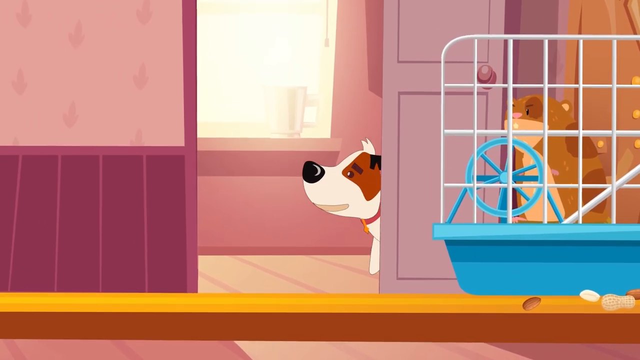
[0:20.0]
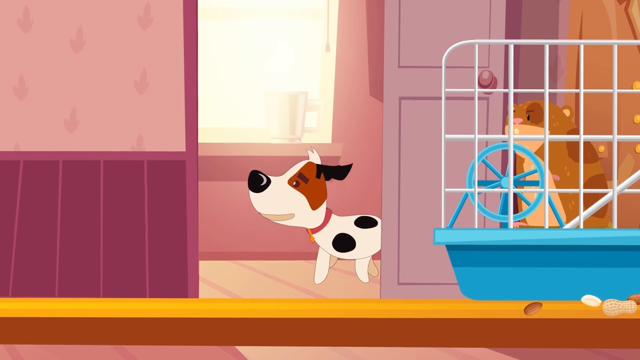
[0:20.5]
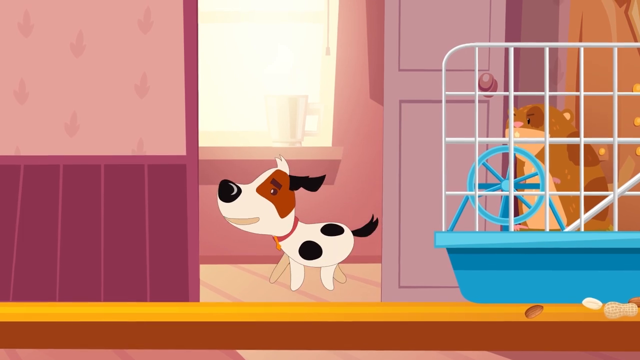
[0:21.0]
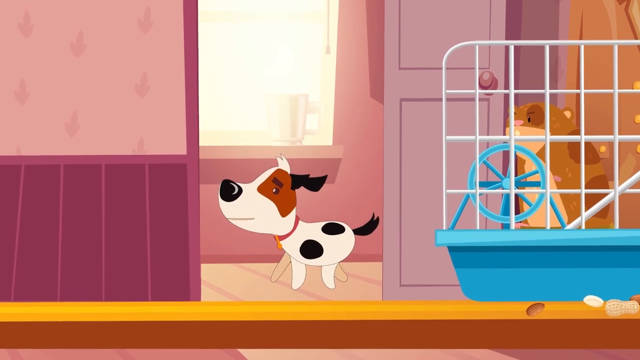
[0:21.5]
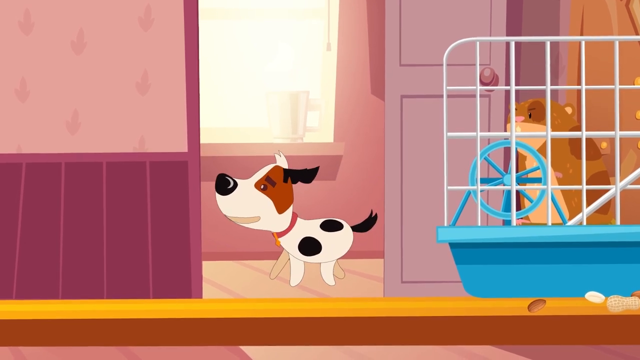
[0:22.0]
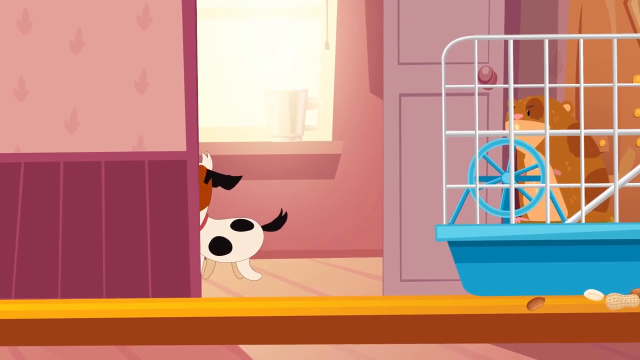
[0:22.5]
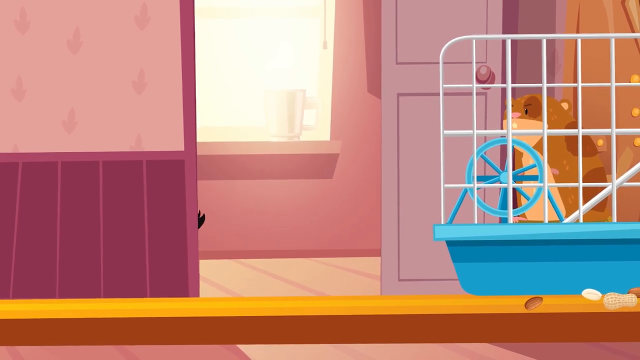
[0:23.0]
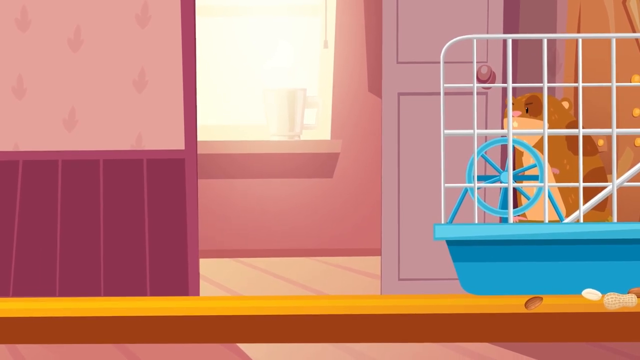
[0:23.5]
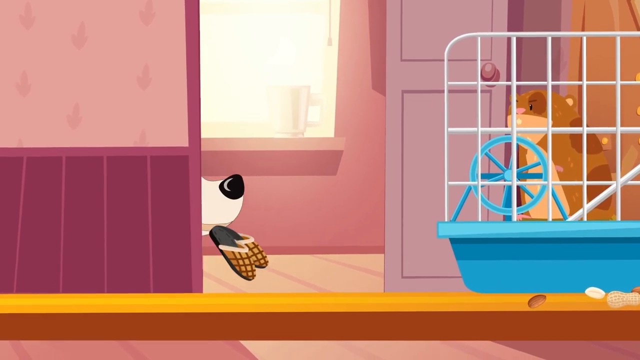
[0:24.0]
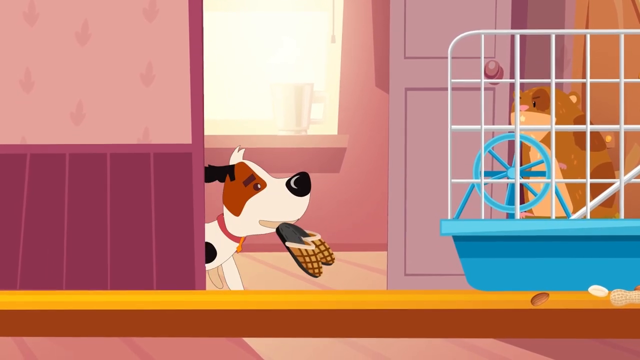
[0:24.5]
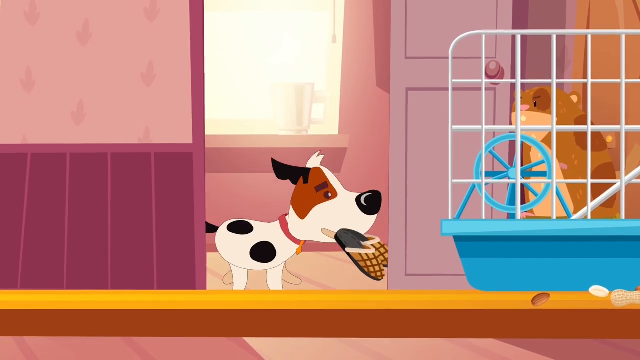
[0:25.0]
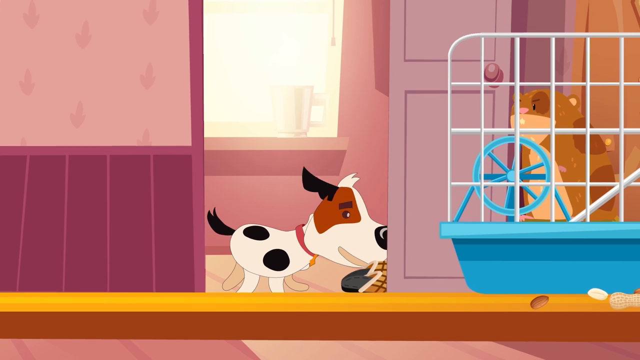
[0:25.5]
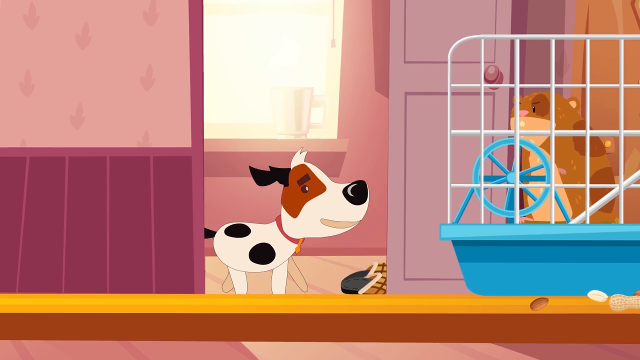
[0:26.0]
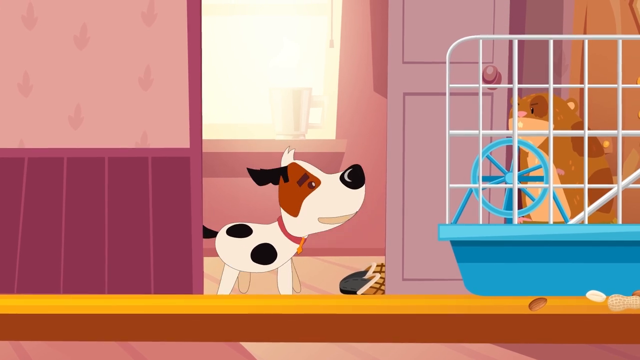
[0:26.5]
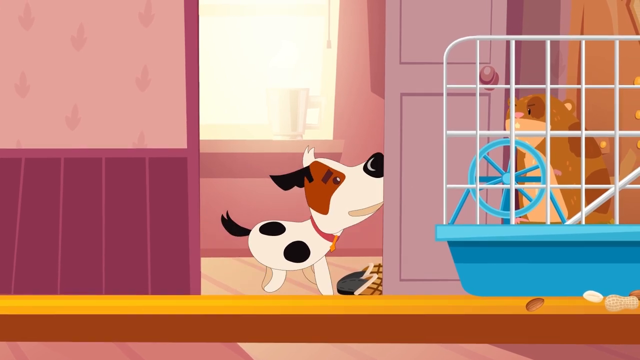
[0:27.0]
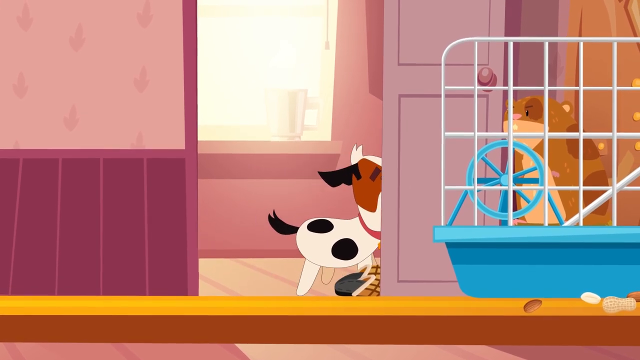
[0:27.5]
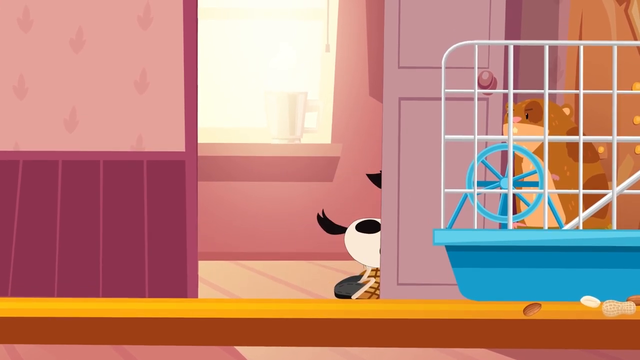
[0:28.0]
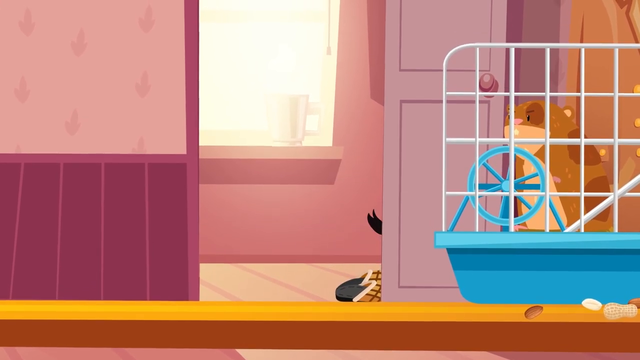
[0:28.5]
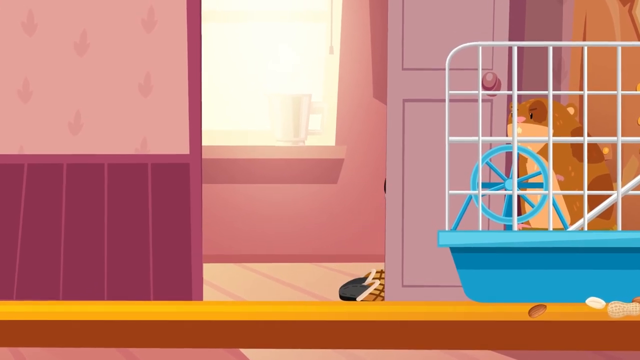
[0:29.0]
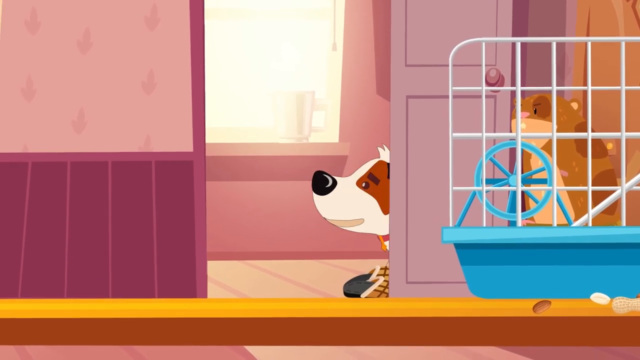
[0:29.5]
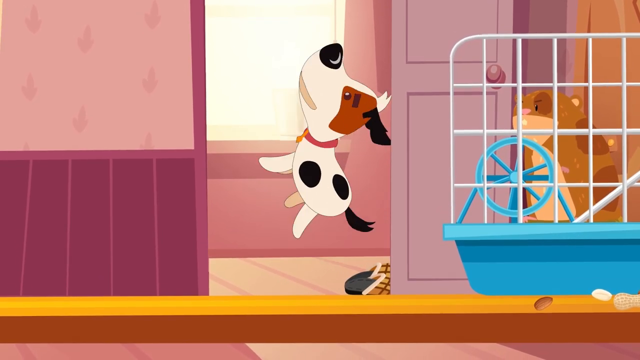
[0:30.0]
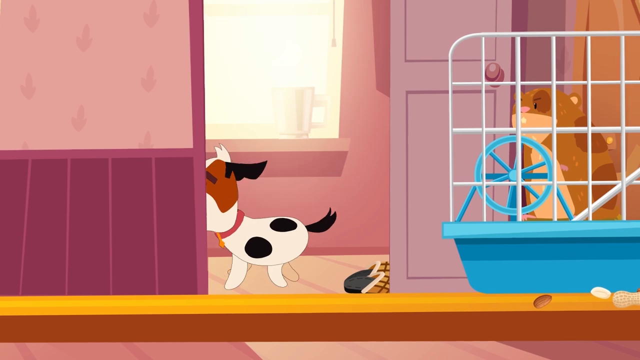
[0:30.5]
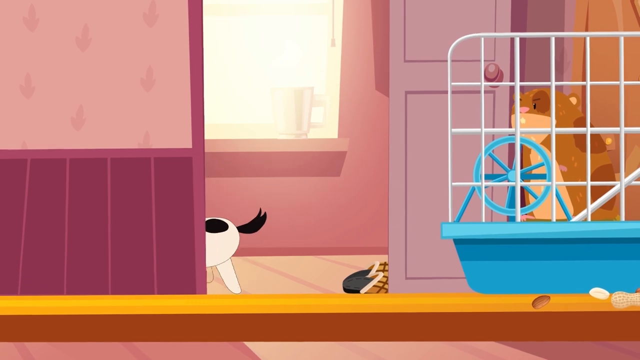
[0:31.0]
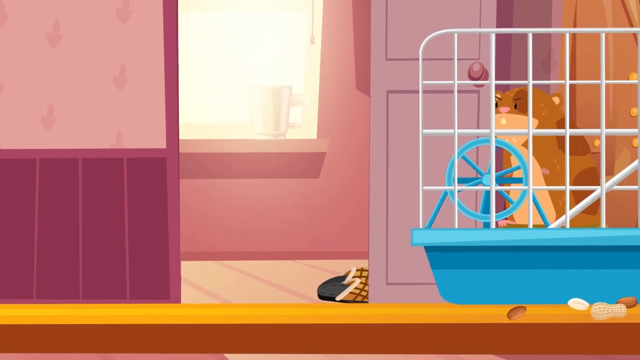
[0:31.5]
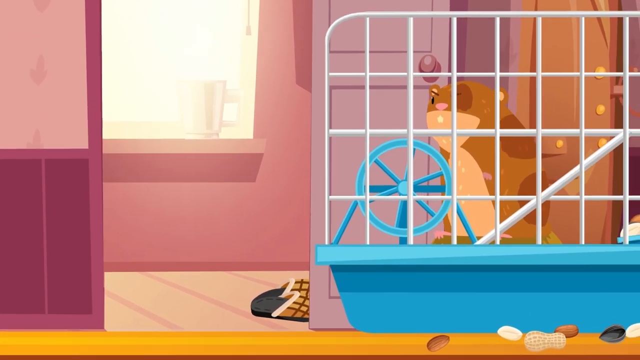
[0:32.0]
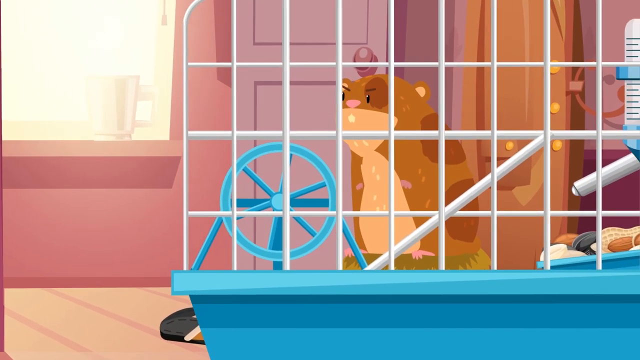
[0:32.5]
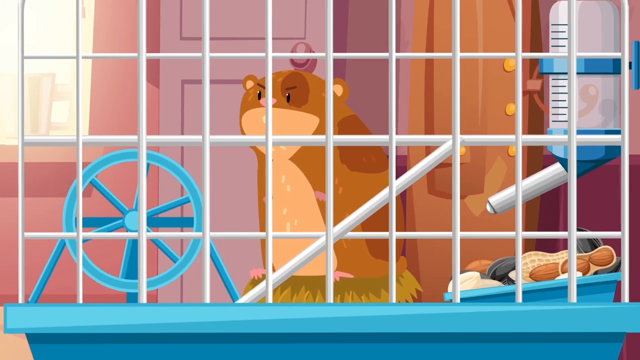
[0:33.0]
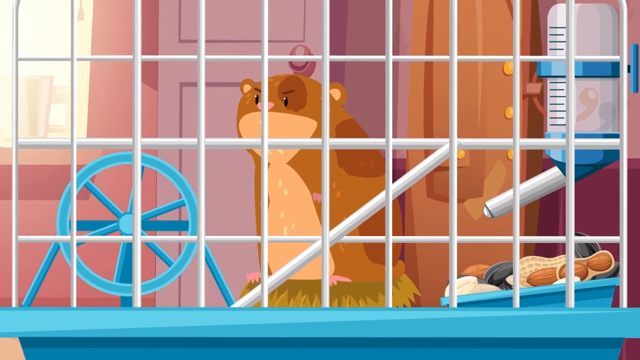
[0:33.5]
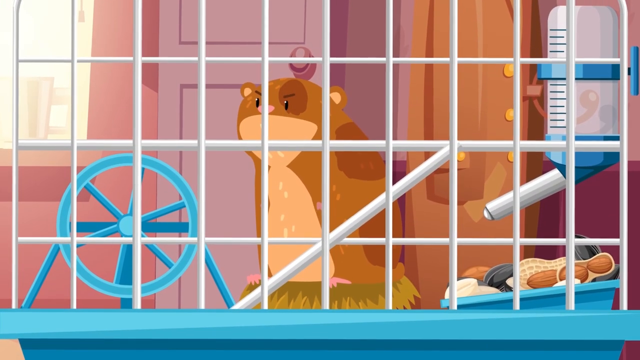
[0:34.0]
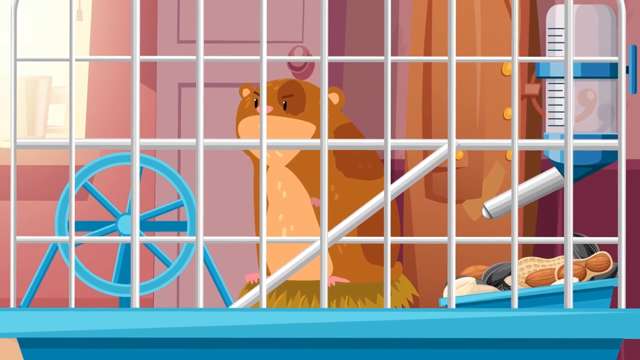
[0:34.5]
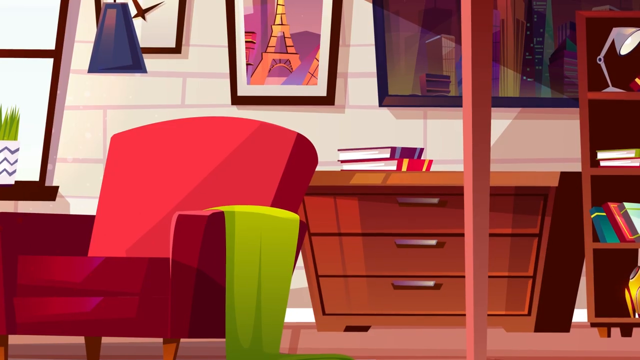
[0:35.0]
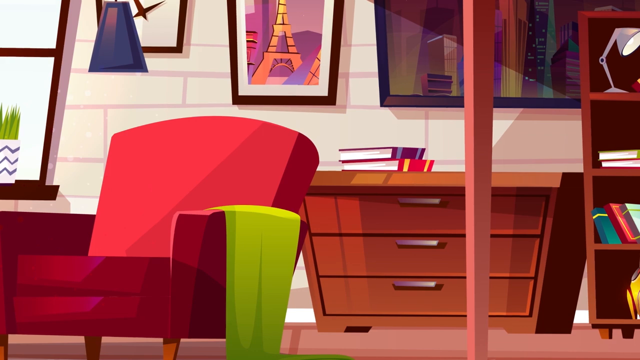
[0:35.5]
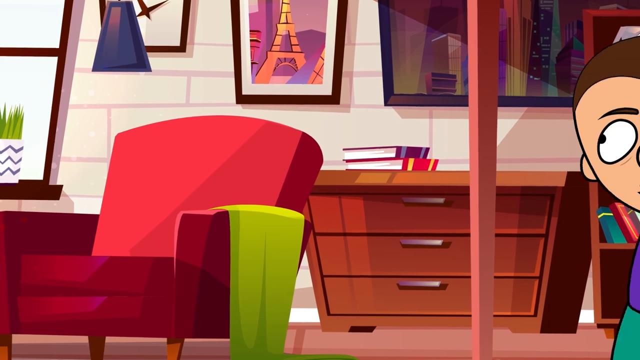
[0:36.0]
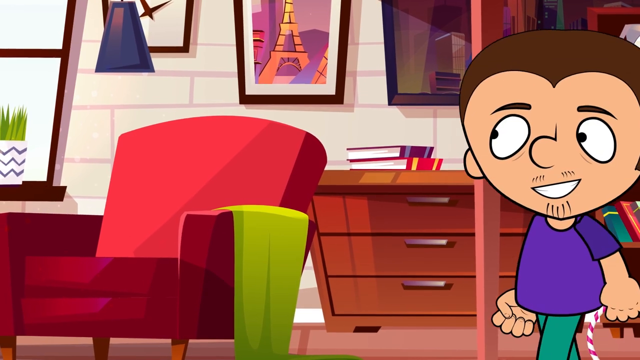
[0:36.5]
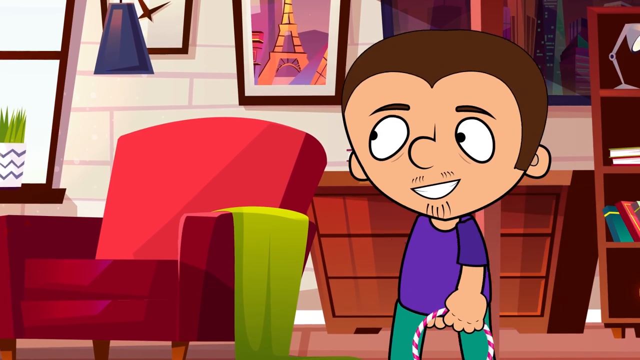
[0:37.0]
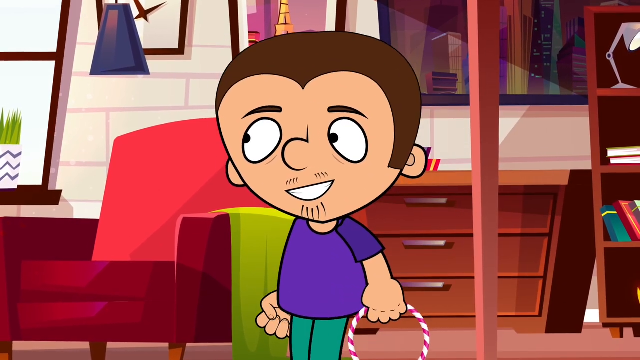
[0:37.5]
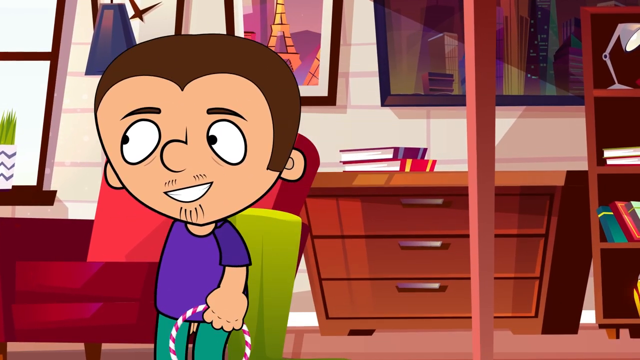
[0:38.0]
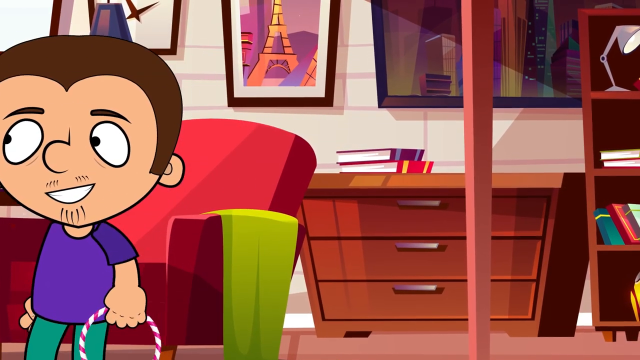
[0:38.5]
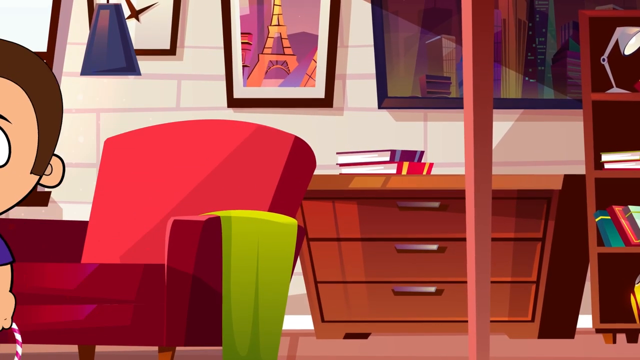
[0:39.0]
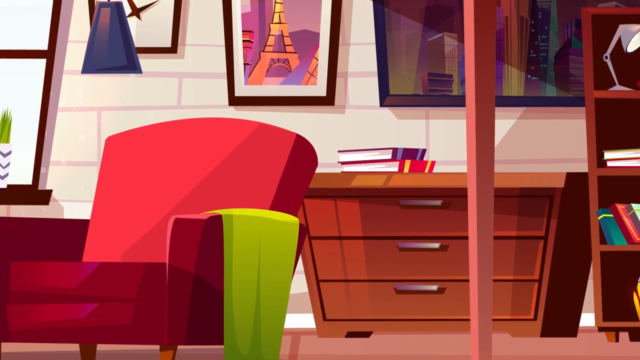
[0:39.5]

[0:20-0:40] The hamster is in a white and blue cage with a spinning wheel inside. In the background, near a door and hallway, a white and black dog appears; he has two black spots and a brown patch over his eye. He walks through nonchalantly, says something to the hamster and keeps walking. He is then seen carrying two slippers in his mouth, yellow with brown stripes and black soles; he drops them on the ground and walks off. He comes back and does a somersault in the air. The camera zooms into the hamster, which looks a bit irritated. The male character then walks by carrying what appears to be a small red and white hula hoop in his hand.